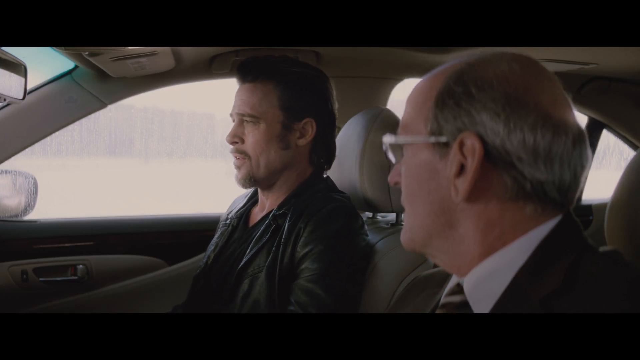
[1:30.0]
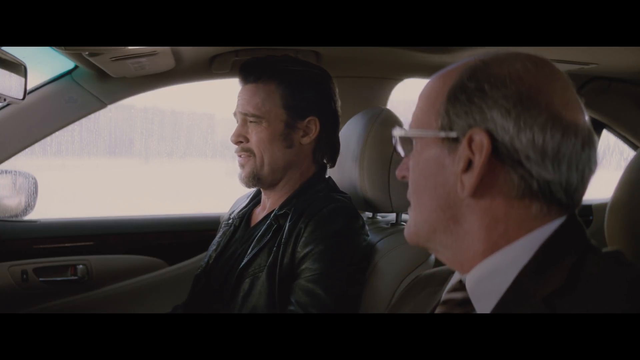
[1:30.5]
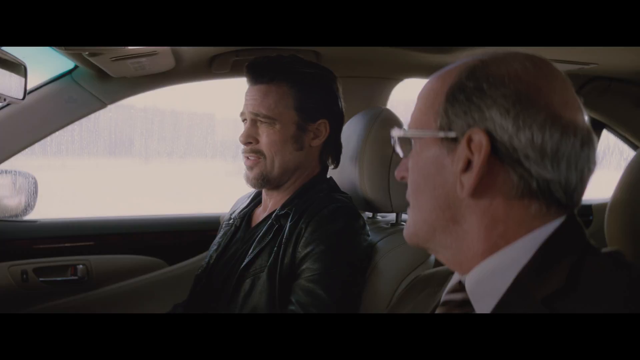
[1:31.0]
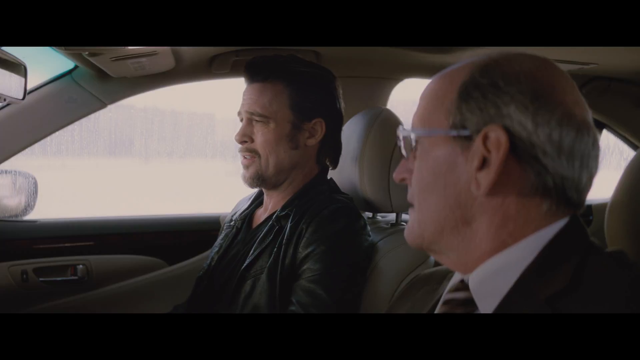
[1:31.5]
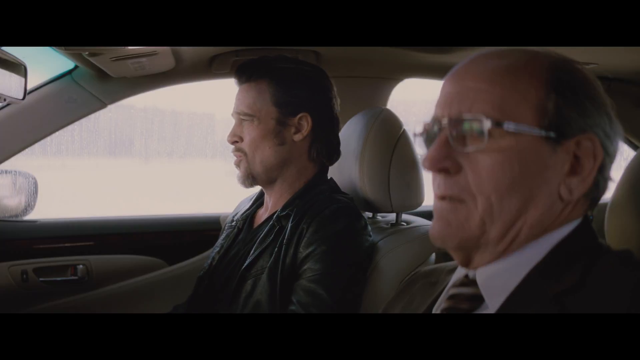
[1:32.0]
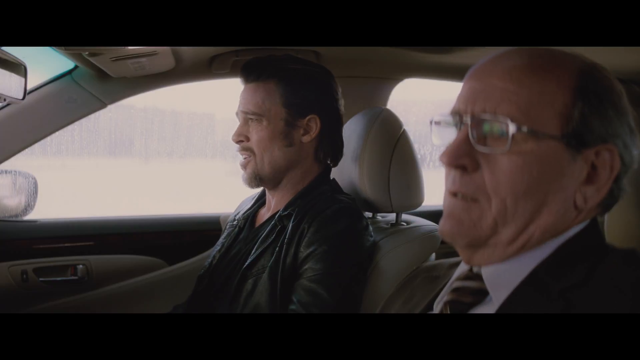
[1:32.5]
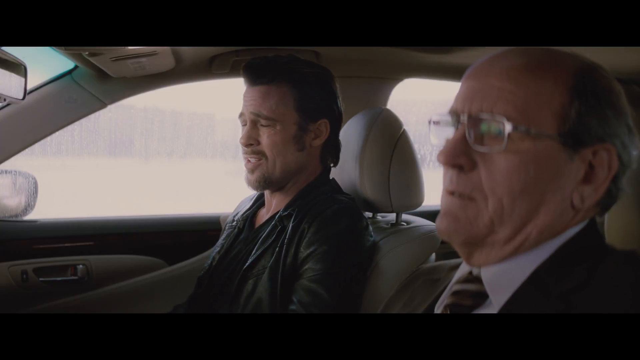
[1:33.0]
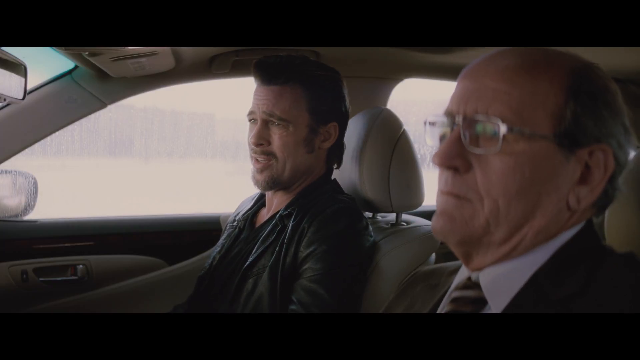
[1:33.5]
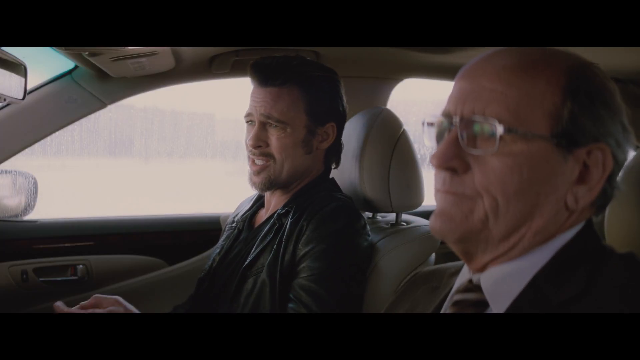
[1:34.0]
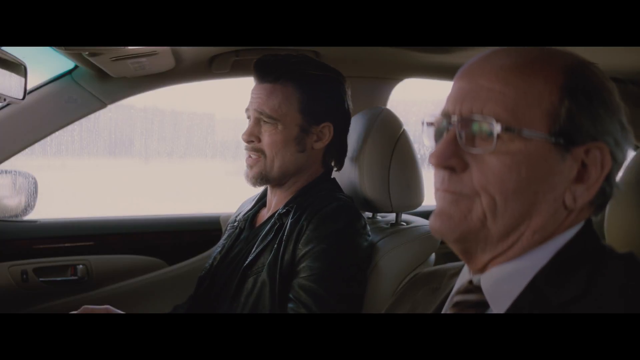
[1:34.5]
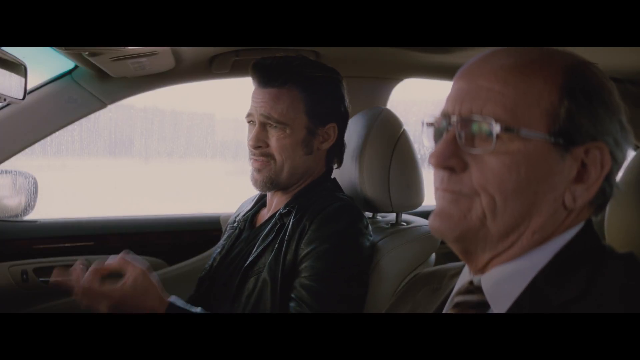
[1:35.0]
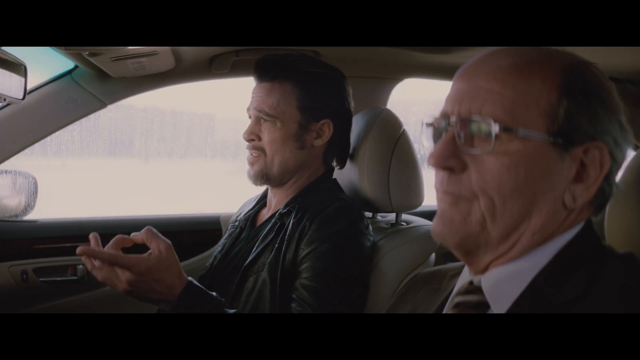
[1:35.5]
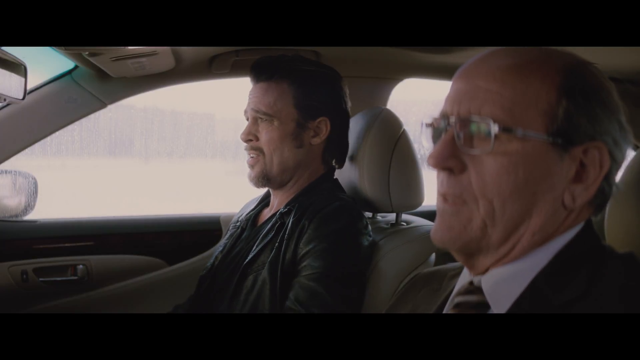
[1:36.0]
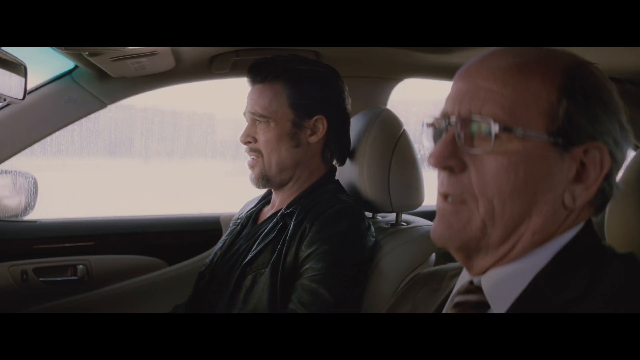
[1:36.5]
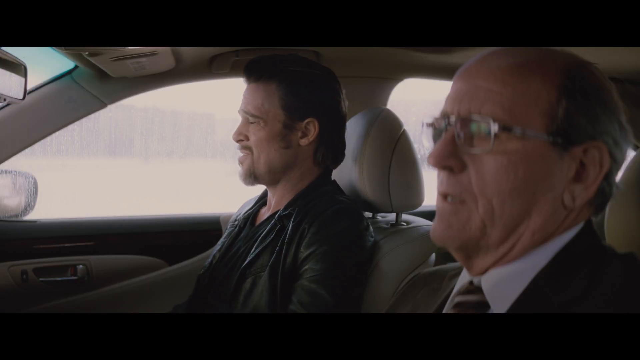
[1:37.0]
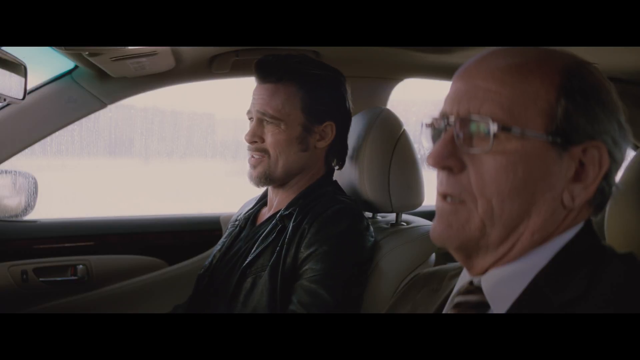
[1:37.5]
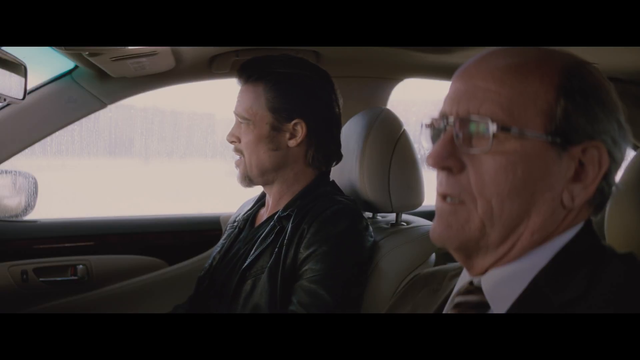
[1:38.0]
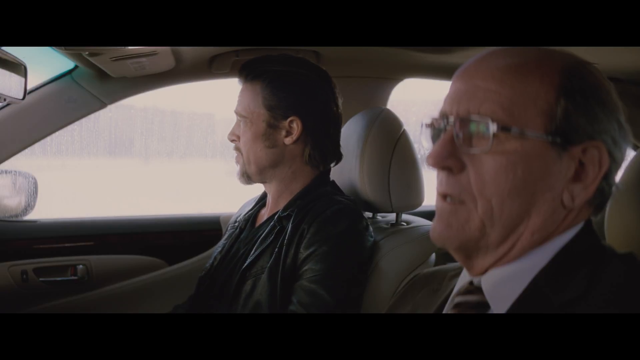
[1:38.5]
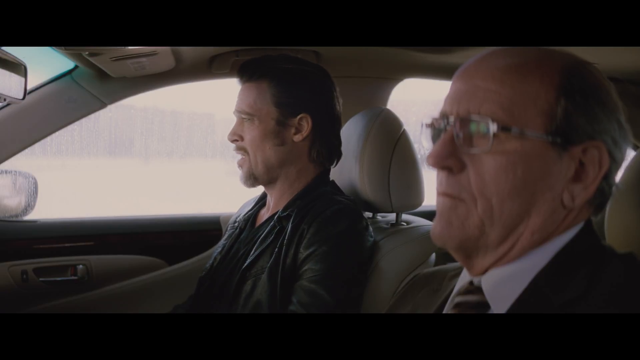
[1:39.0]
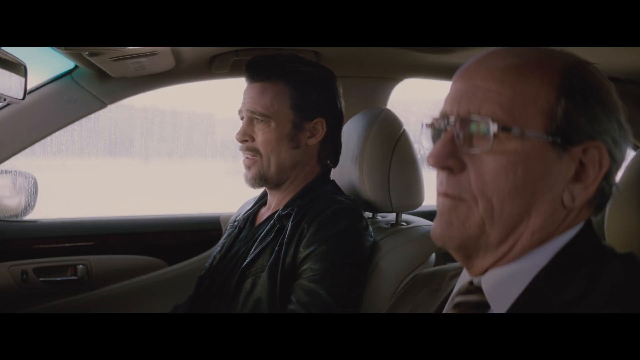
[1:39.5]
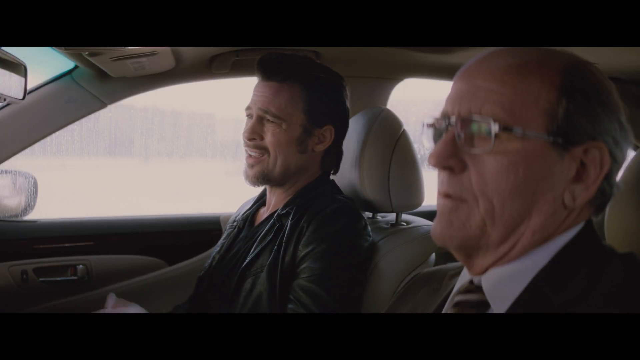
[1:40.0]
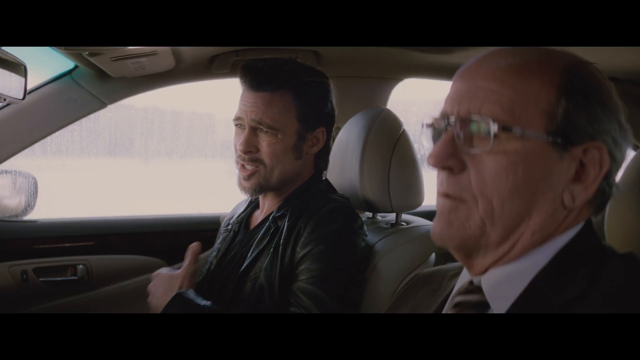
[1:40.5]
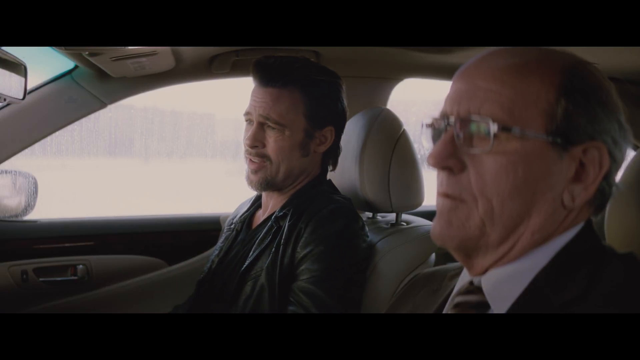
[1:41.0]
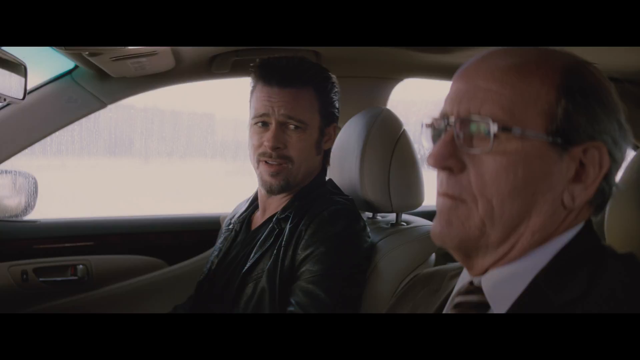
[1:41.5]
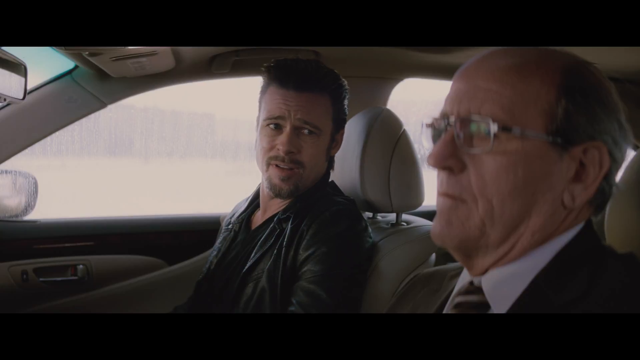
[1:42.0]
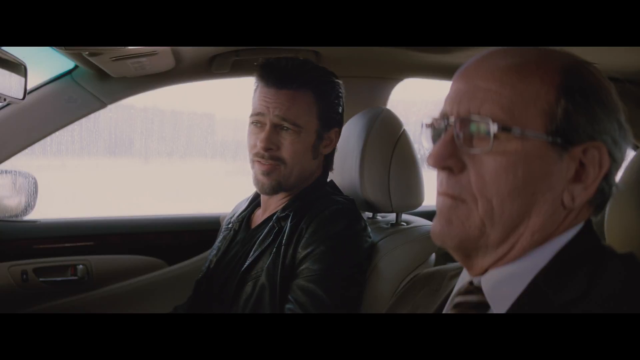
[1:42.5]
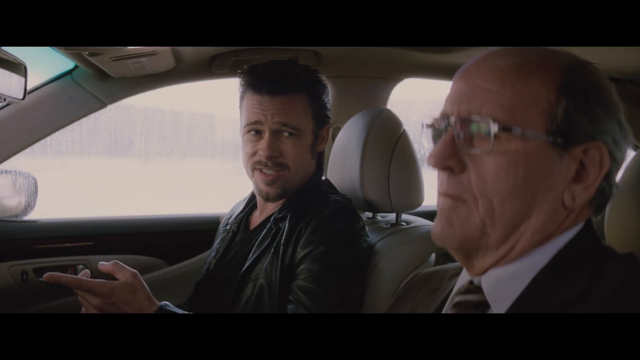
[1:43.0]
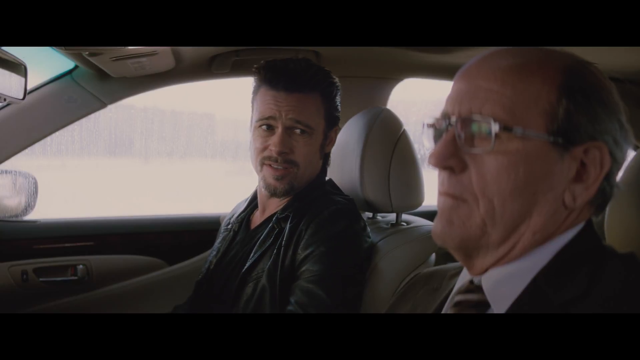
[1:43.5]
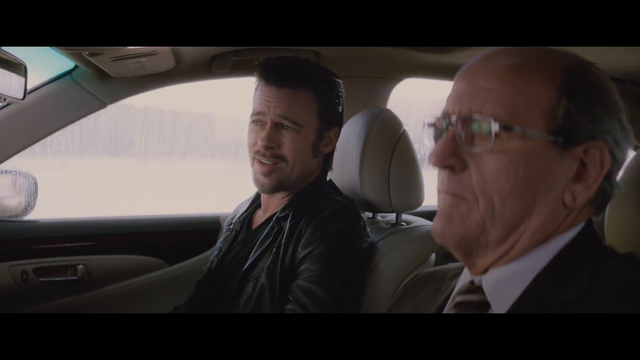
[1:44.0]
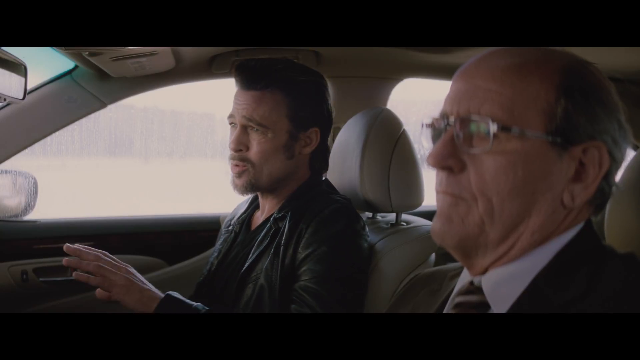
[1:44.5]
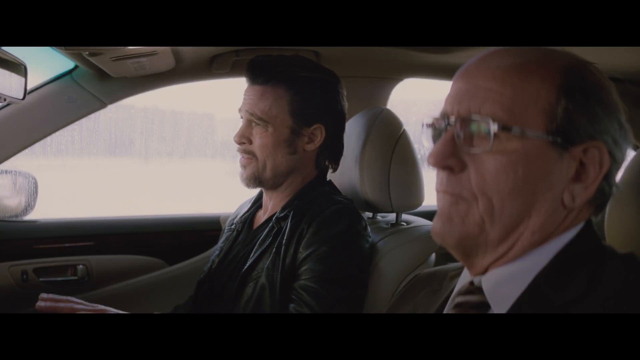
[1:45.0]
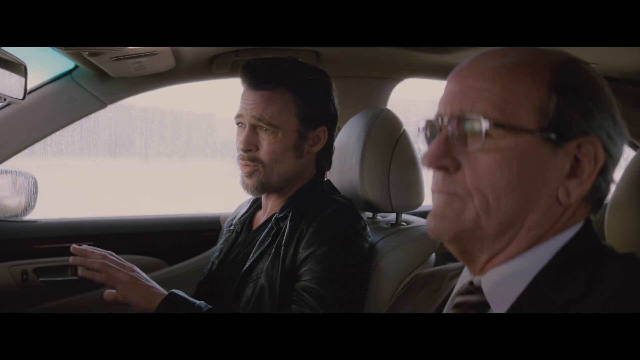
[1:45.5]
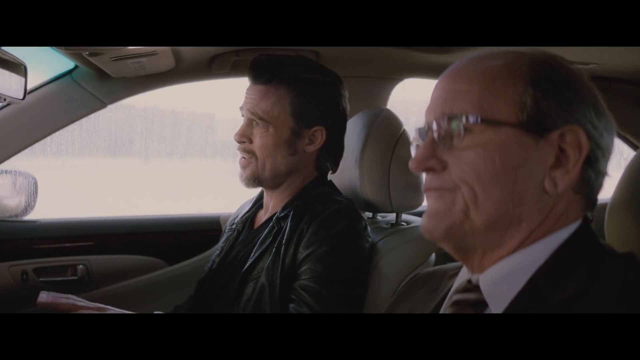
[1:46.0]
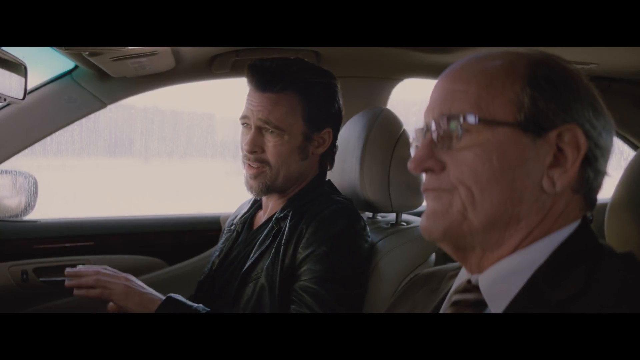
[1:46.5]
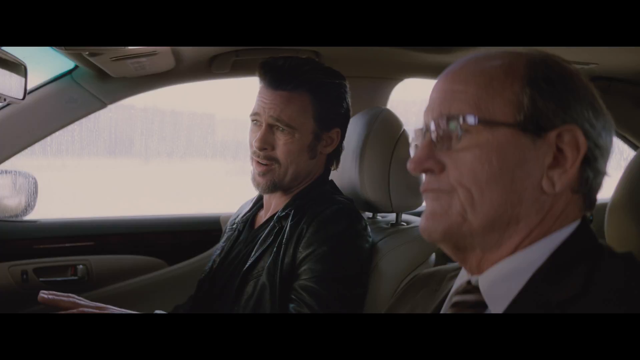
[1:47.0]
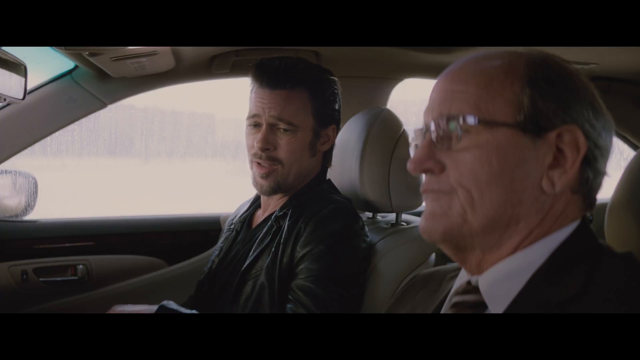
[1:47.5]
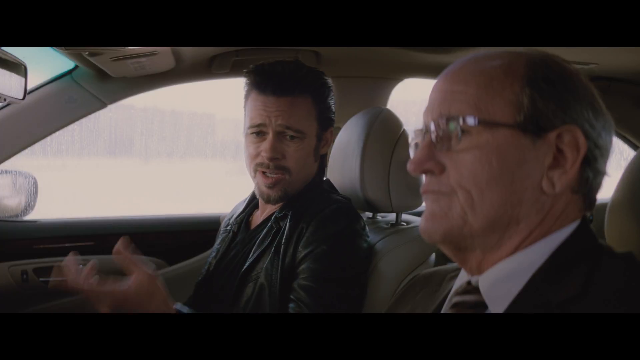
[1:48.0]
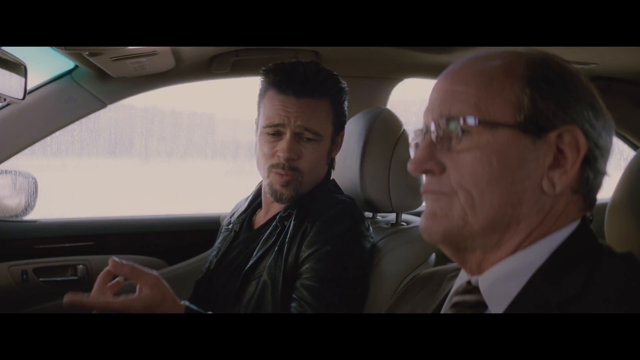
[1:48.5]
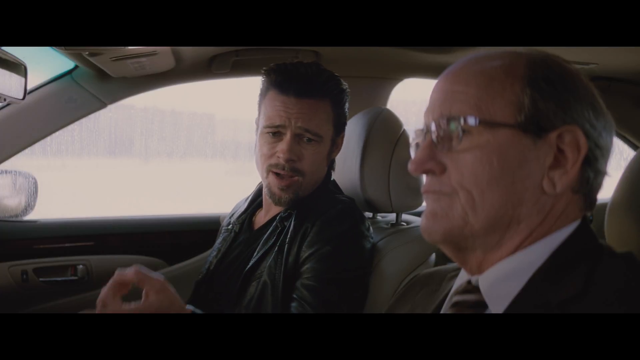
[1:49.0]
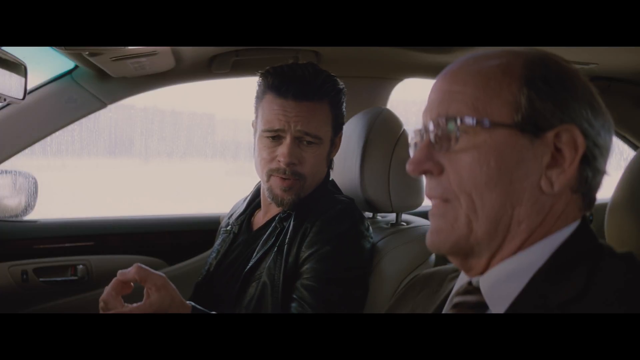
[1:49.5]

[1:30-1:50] Two men are in a car. On the left, in the passenger seat, is Brad Pitt, with a haircut a little like Elvis Presley's and a black biker-style jacket. In the other seat, seen sort of in profile, is an older man with glasses, a black suit of some kind, and a slightly balding head. Brad Pitt is talking, and they are not really looking at each other. Brad Pitt gestures with his left hand, index finger out, pointing forward, then points at himself a little and looks at the other man, not looking too happy. He points with his left index finger toward the front of the car, while the other man does not really respond. The older man then starts to grimace a little as Brad Pitt shakes his left hand and gestures at things. The car has a beige-like interior, the rear view mirror is in the top left corner of the frame, and outside is a very white area; the window seems to have streaks of either snow or rain, as it looks very wet outside, but details are very hard to make out.